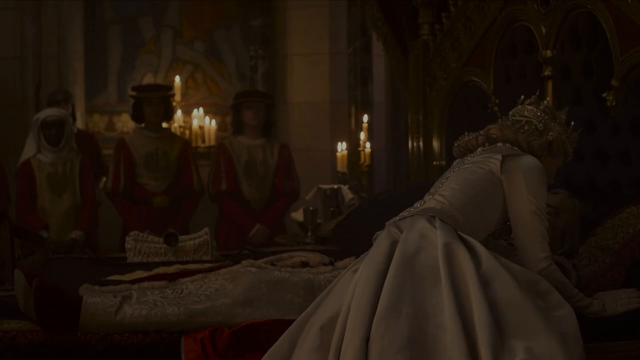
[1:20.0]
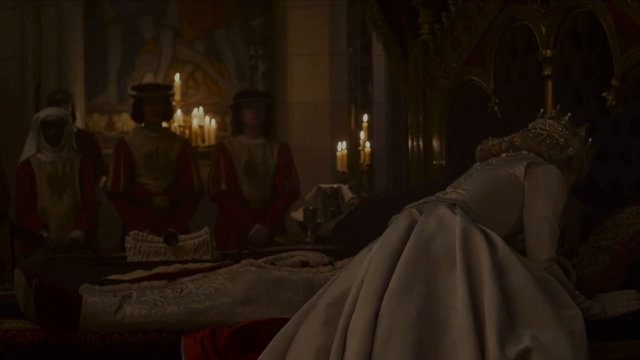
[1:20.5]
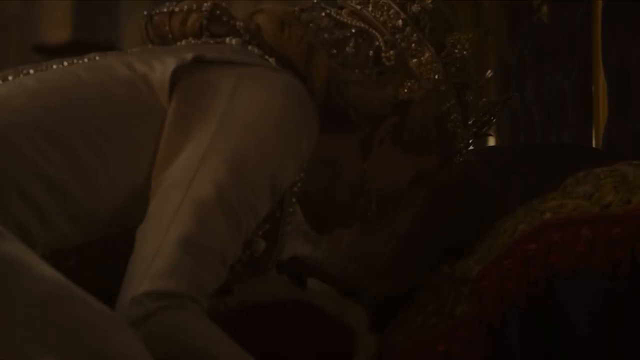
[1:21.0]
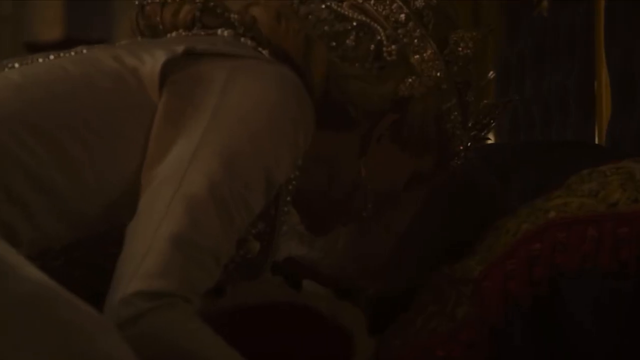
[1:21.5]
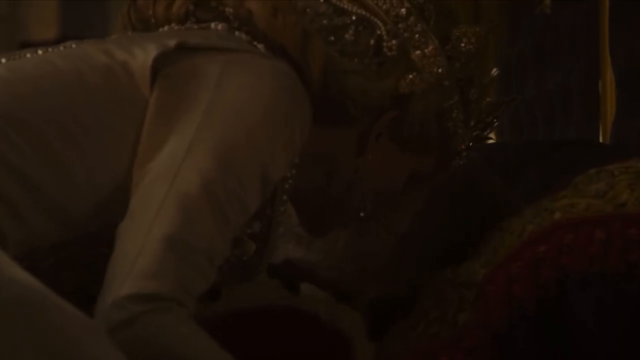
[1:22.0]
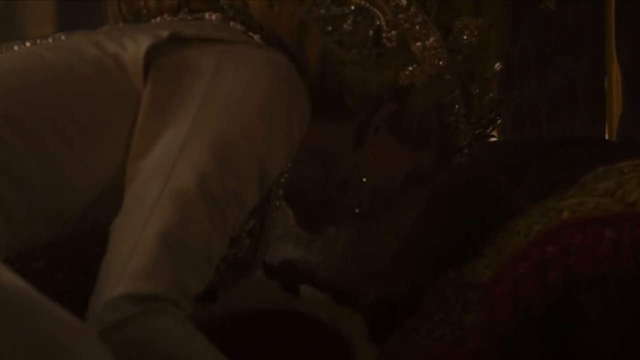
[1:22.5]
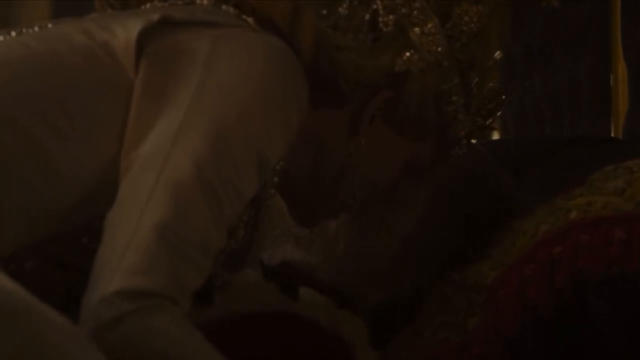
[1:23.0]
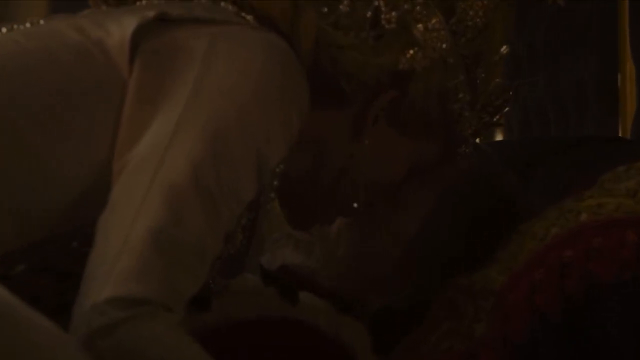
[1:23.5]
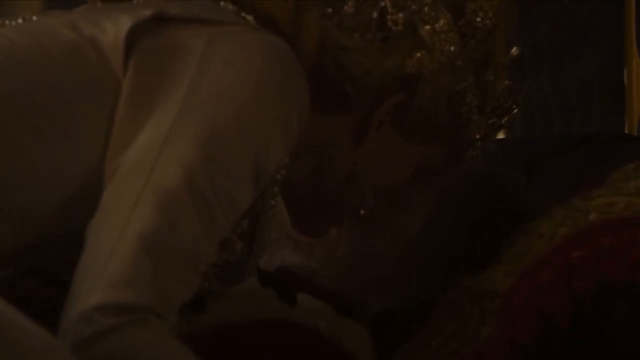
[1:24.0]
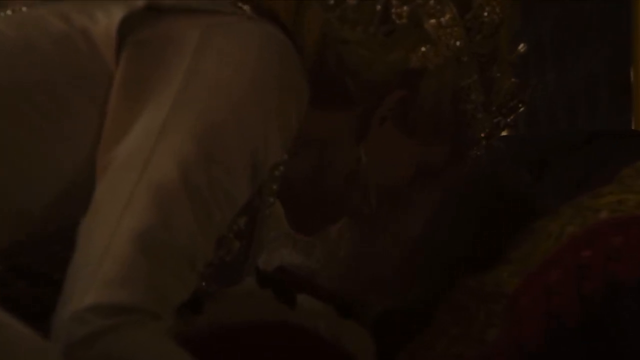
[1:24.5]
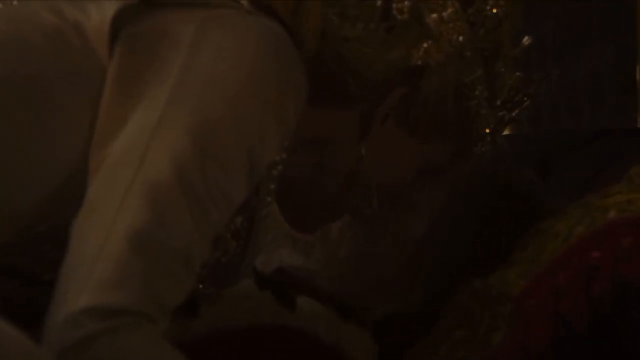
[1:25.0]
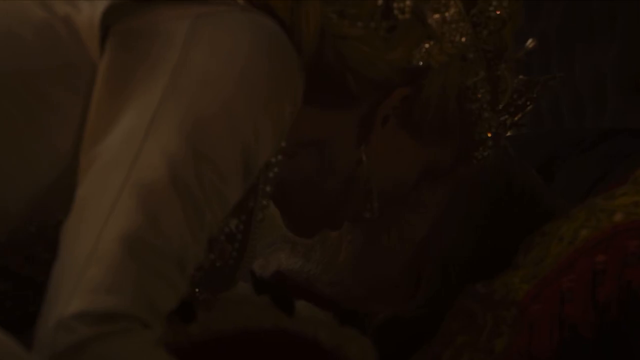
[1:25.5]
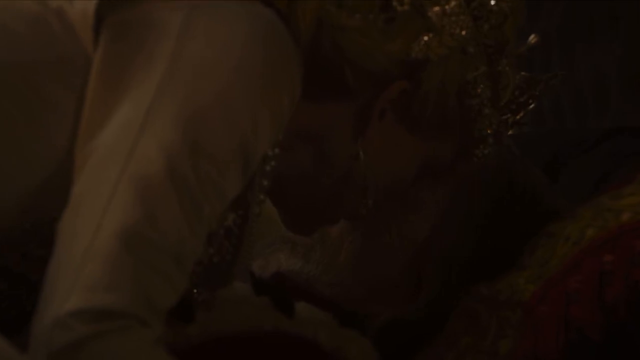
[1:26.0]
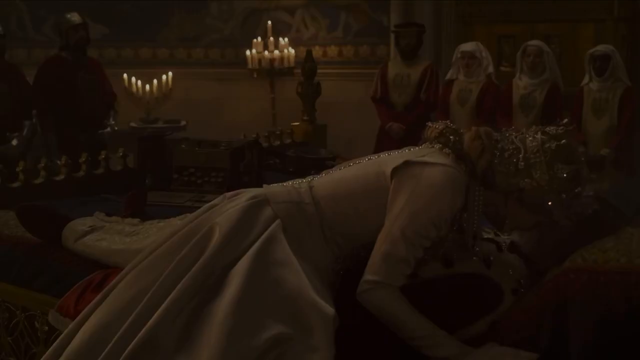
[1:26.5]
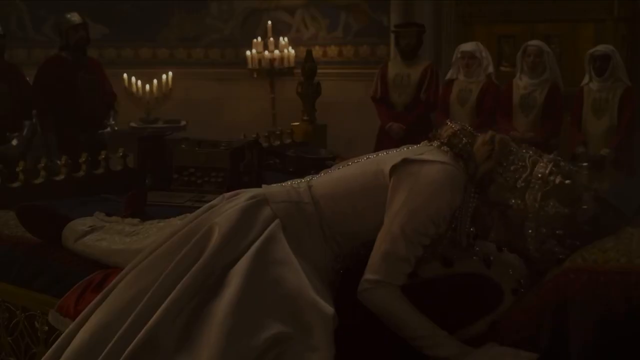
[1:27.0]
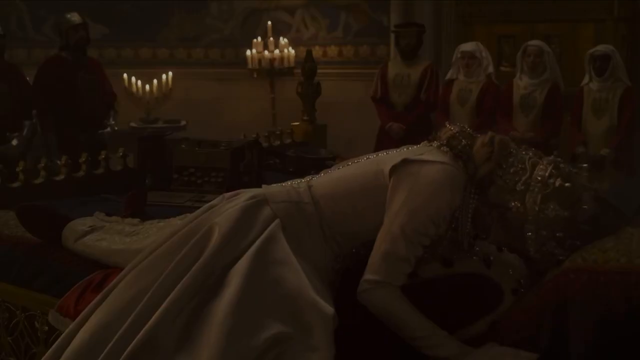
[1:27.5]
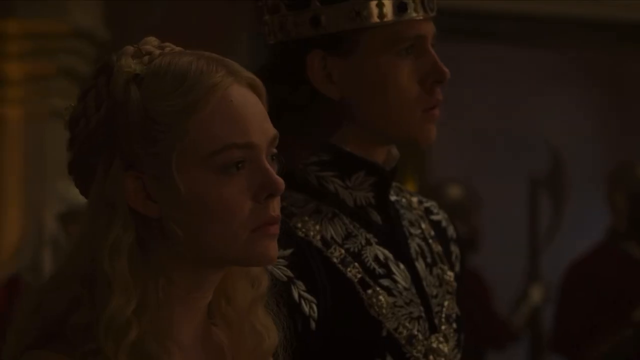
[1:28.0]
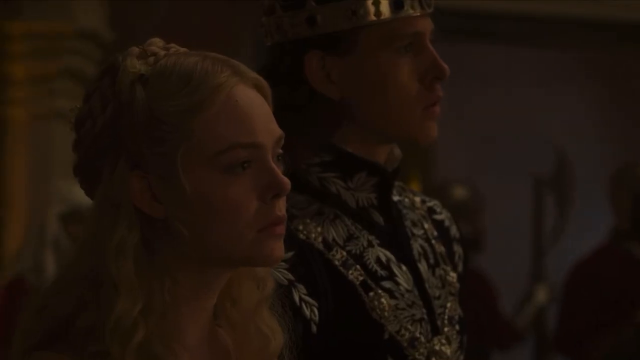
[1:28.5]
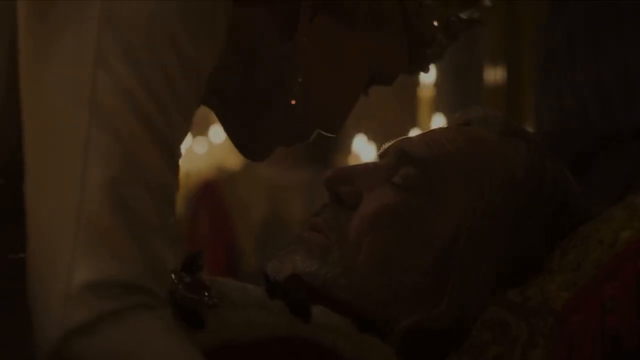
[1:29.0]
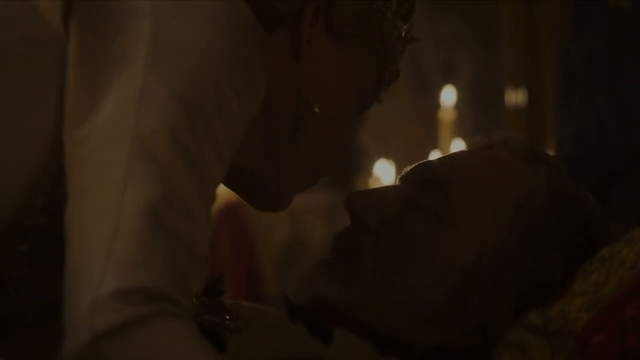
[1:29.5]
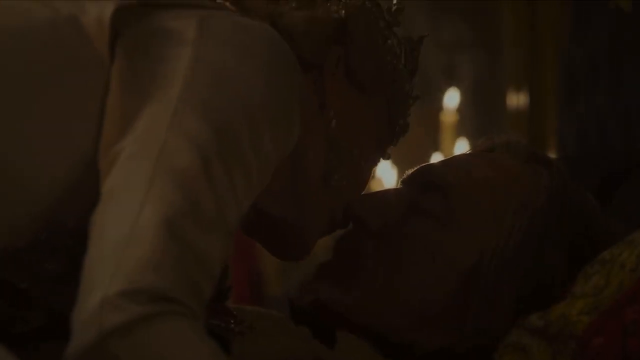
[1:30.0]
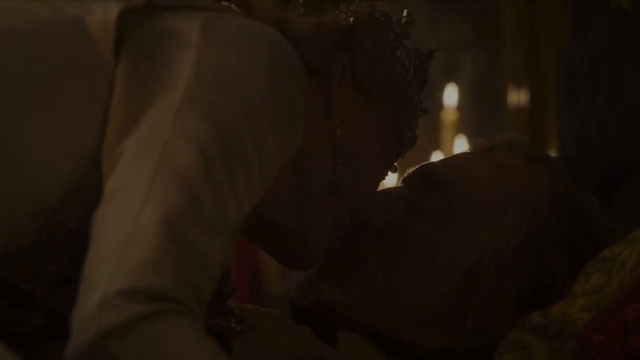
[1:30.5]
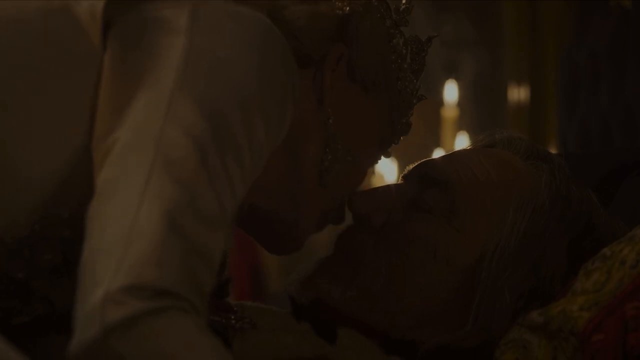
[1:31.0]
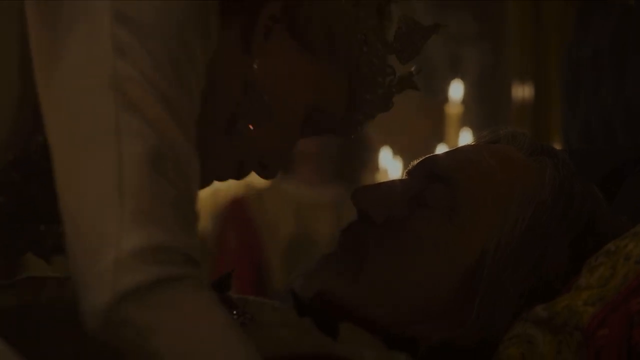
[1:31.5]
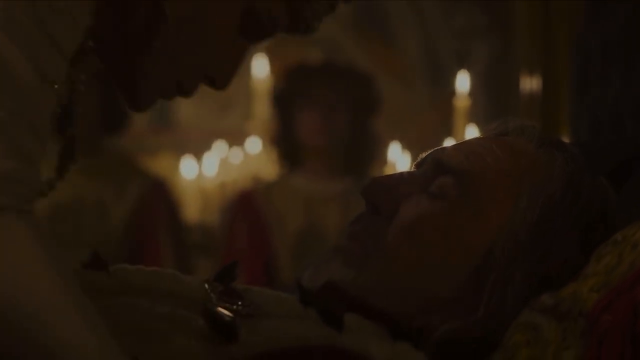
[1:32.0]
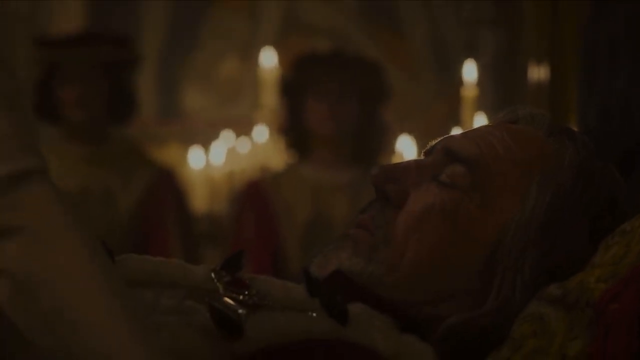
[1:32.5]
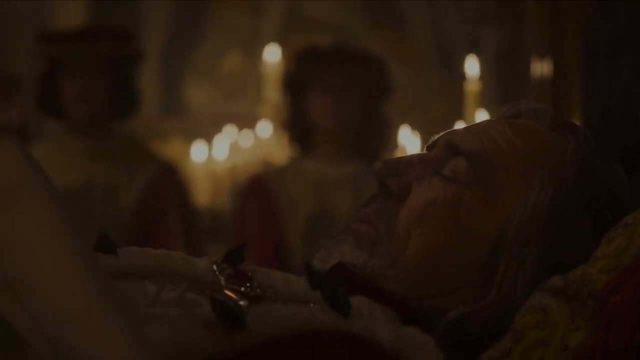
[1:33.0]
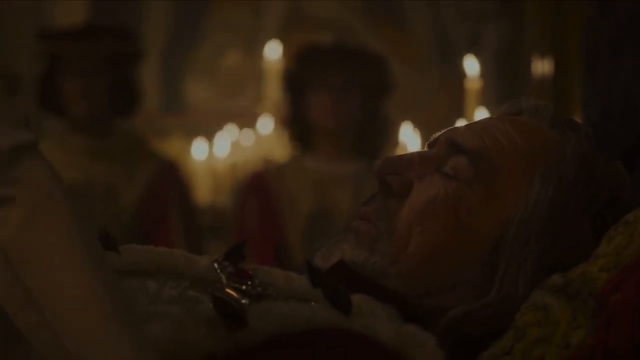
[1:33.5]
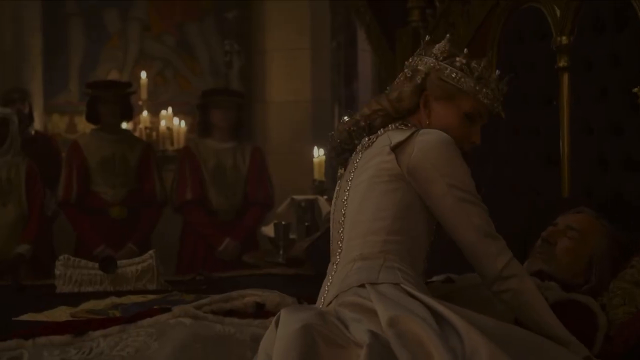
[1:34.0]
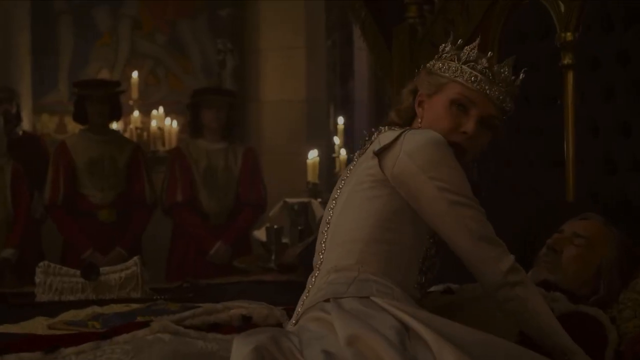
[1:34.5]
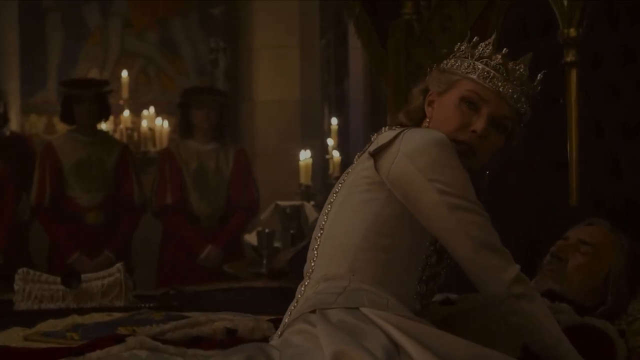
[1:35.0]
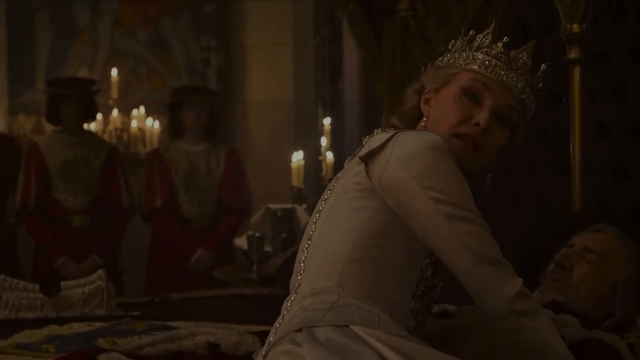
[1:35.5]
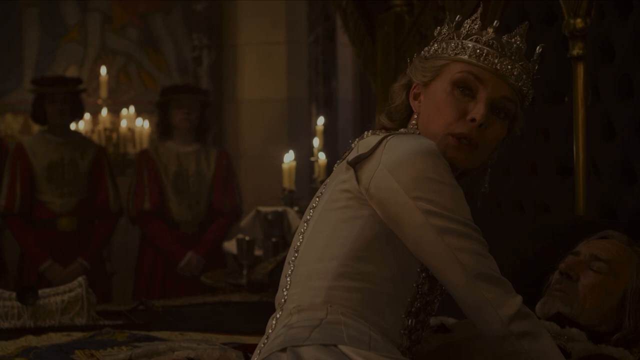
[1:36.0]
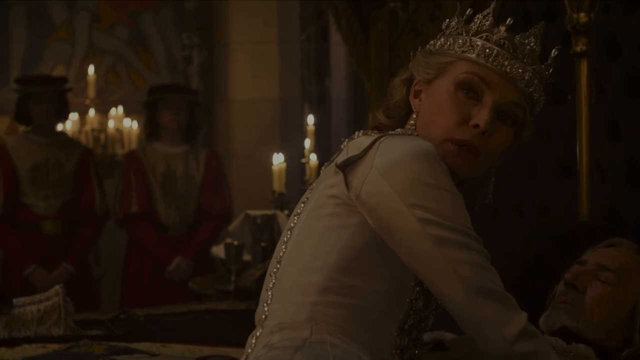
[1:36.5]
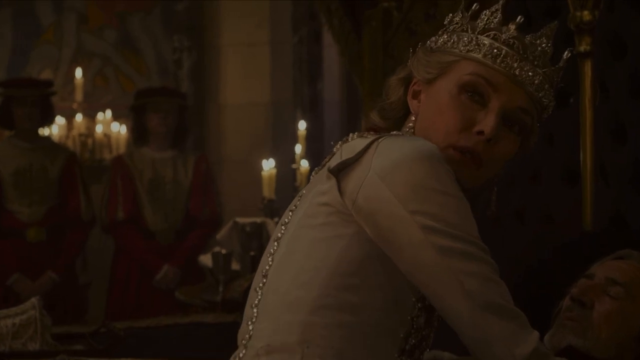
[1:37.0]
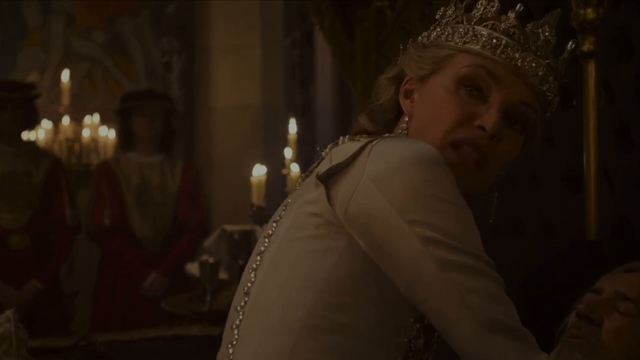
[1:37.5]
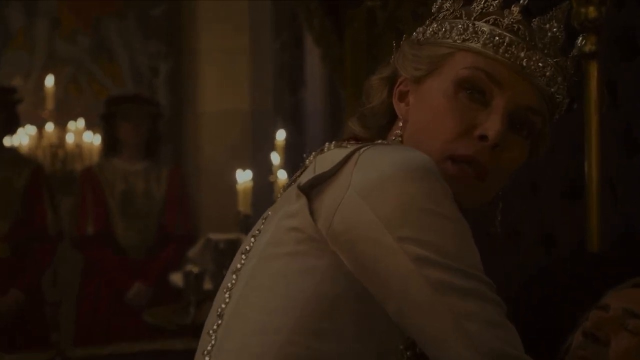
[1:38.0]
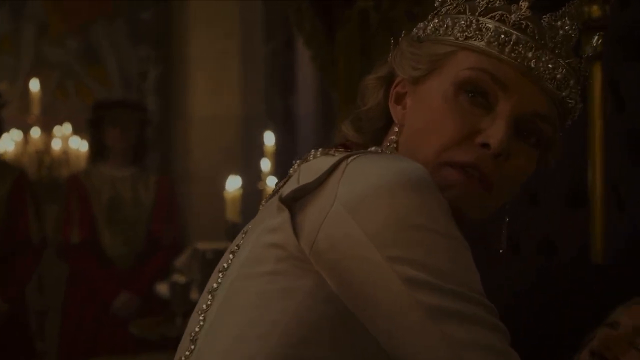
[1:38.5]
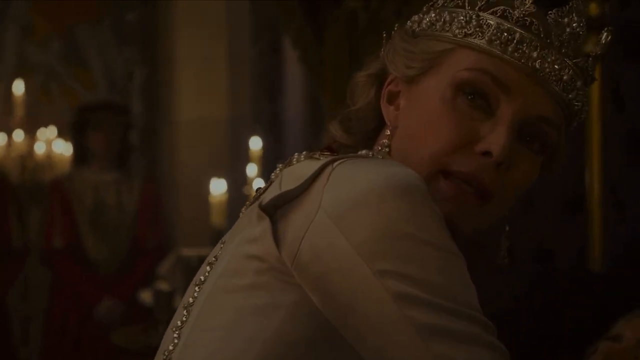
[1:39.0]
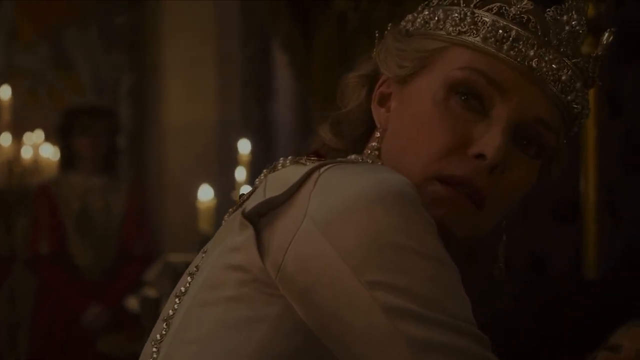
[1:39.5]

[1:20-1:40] Someone whispers into the king's ear, and he is kissed on the mouth, the cheeks and the forehead while the others look on. The king lies lifeless on the bed, with wardens by his side and candles. The prince and the princesses look on steadily to see whether there is any change in the king's state.